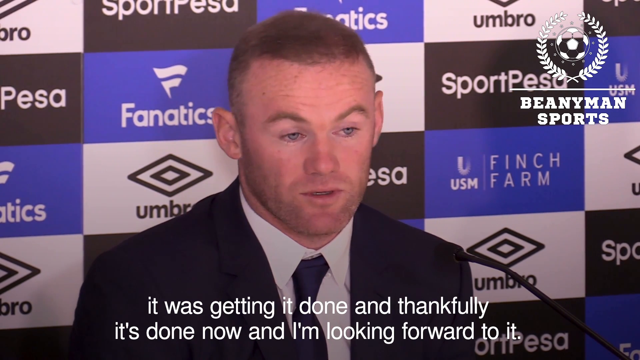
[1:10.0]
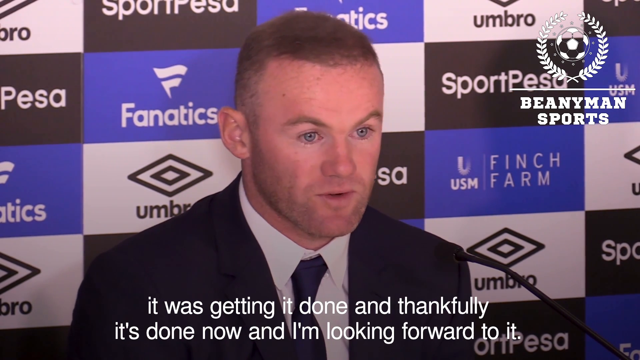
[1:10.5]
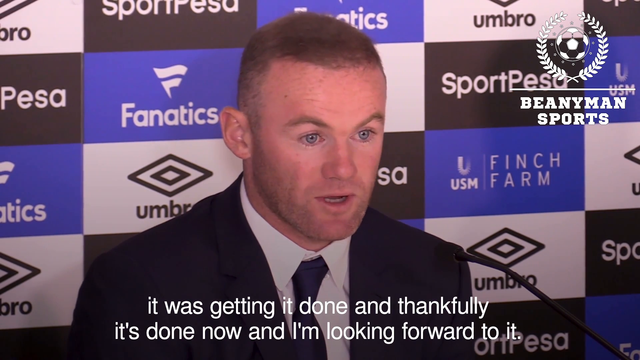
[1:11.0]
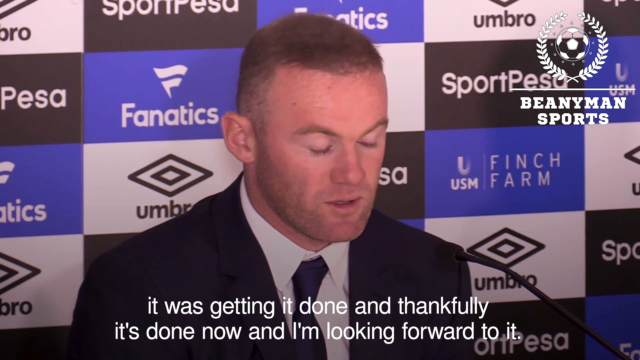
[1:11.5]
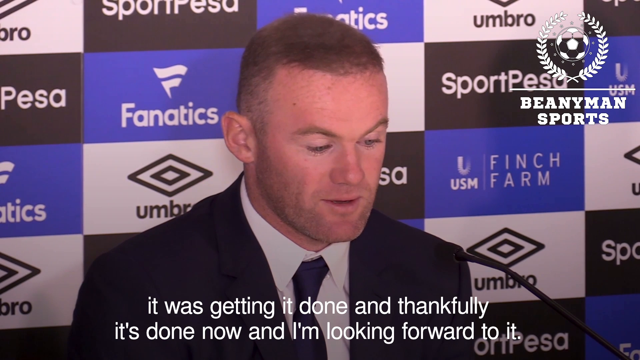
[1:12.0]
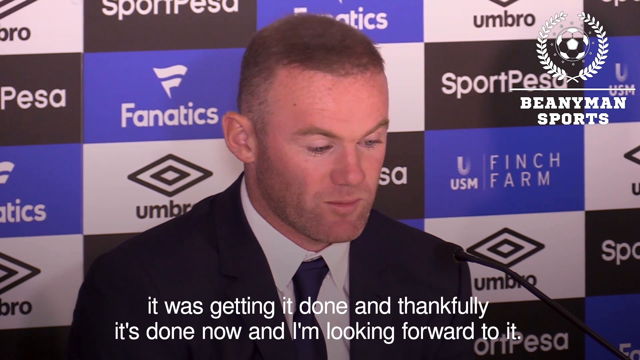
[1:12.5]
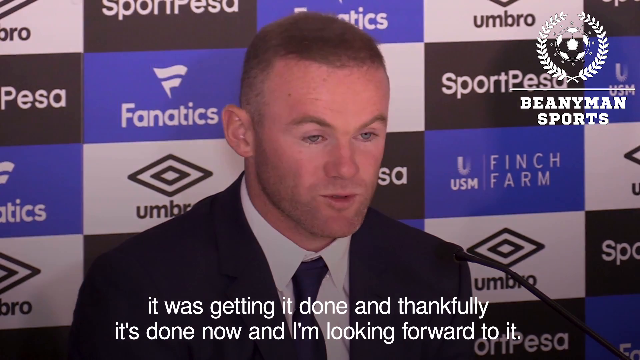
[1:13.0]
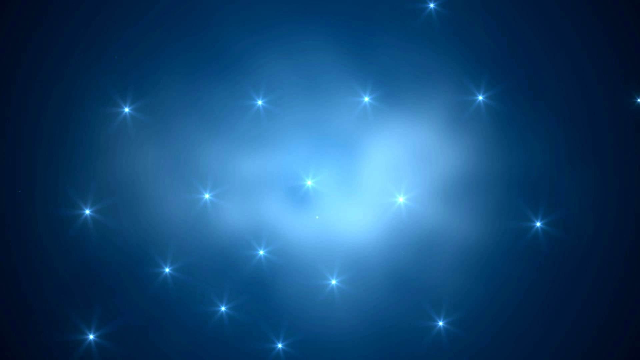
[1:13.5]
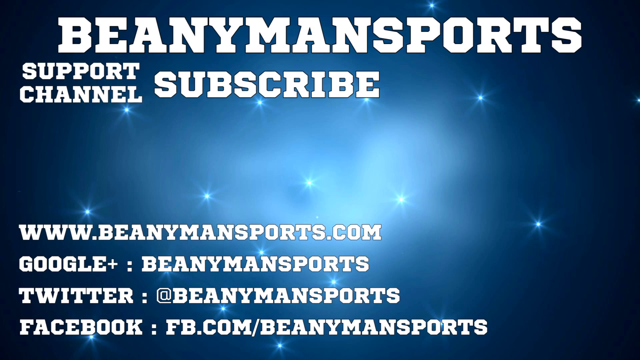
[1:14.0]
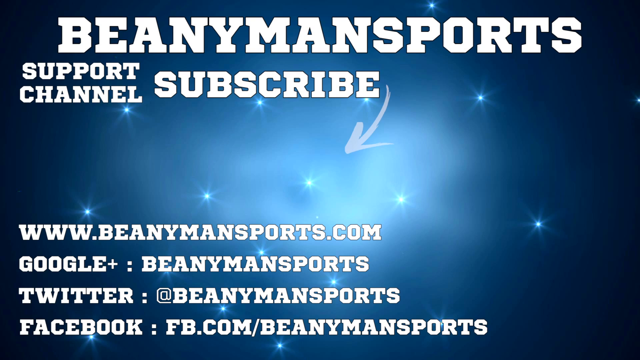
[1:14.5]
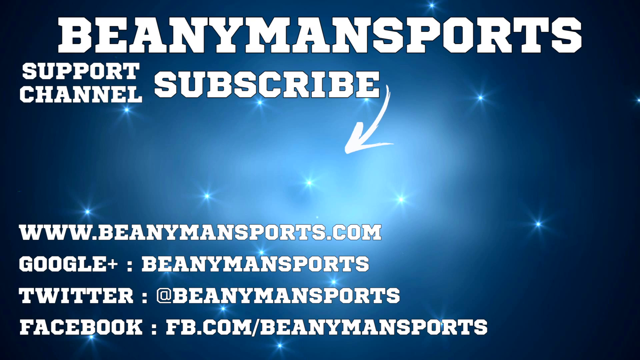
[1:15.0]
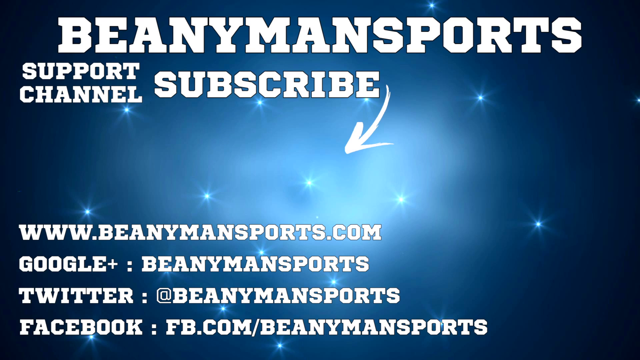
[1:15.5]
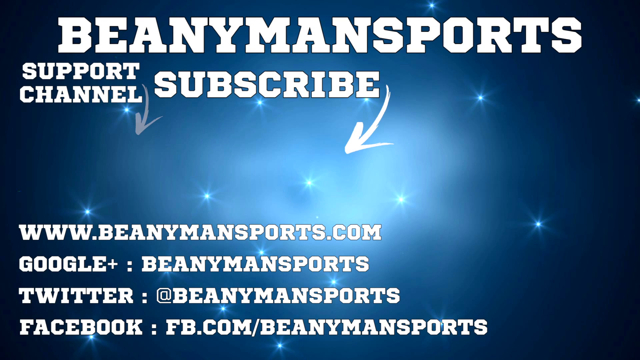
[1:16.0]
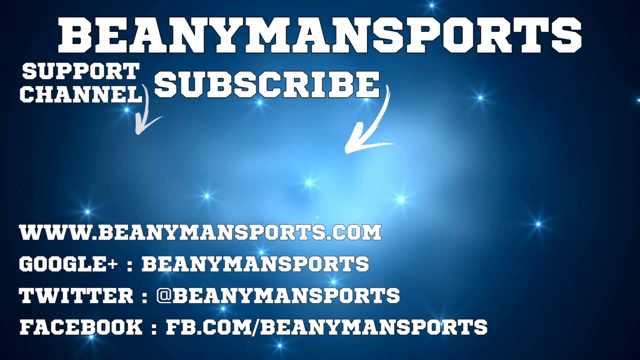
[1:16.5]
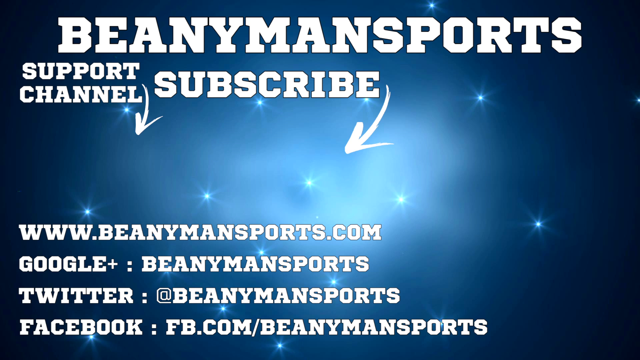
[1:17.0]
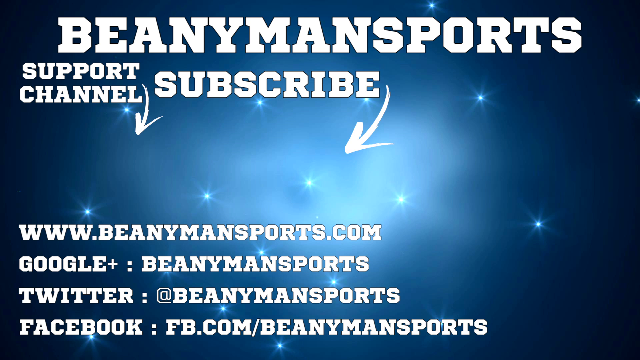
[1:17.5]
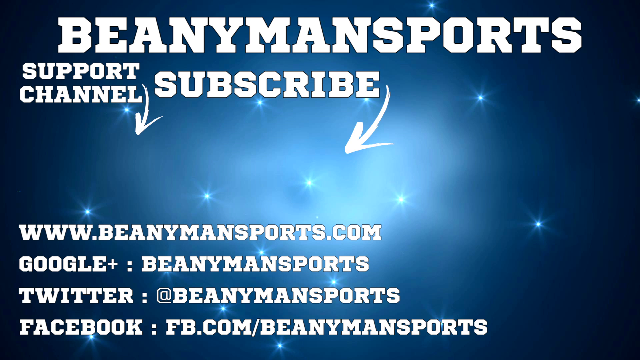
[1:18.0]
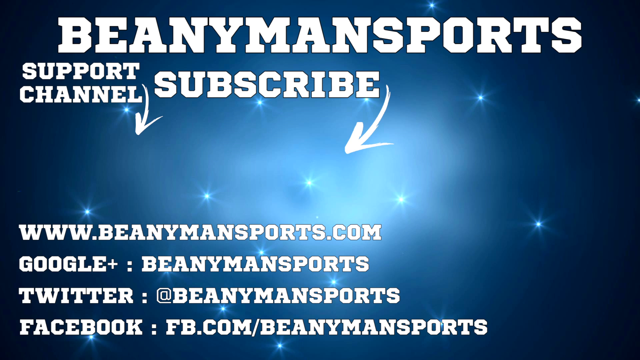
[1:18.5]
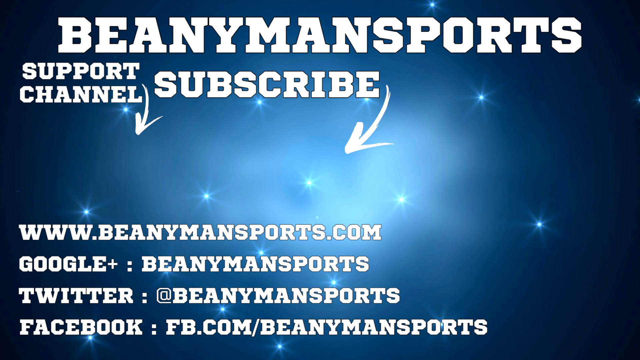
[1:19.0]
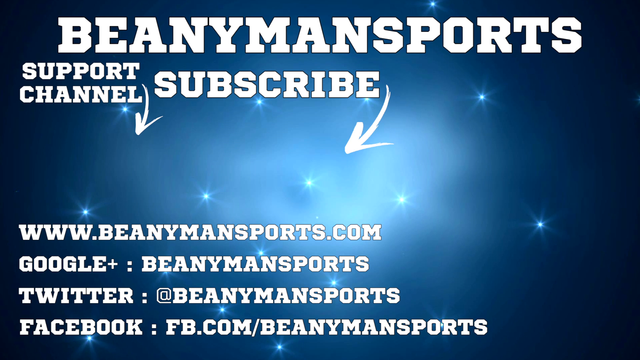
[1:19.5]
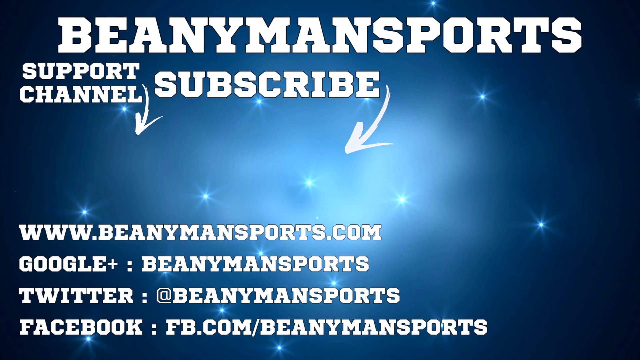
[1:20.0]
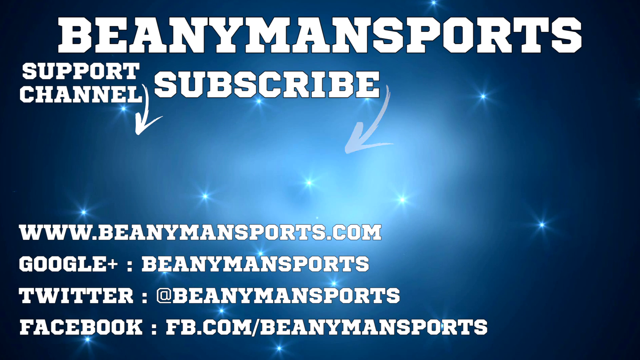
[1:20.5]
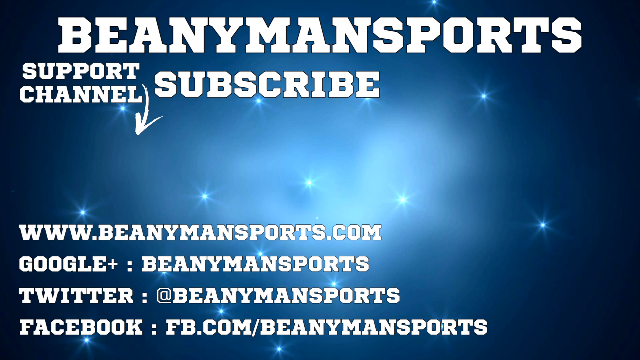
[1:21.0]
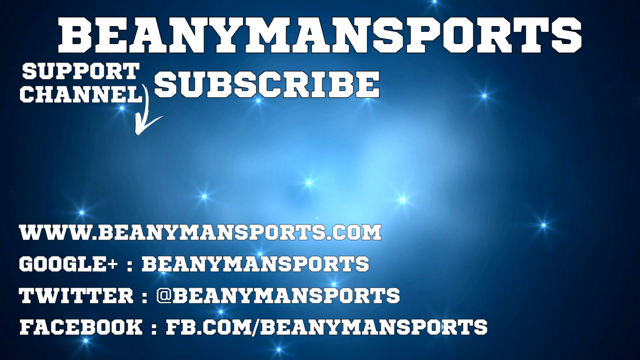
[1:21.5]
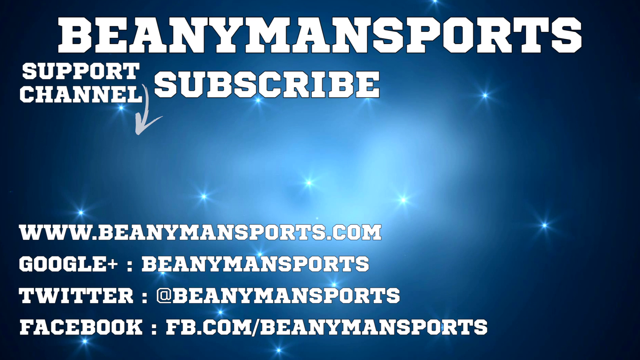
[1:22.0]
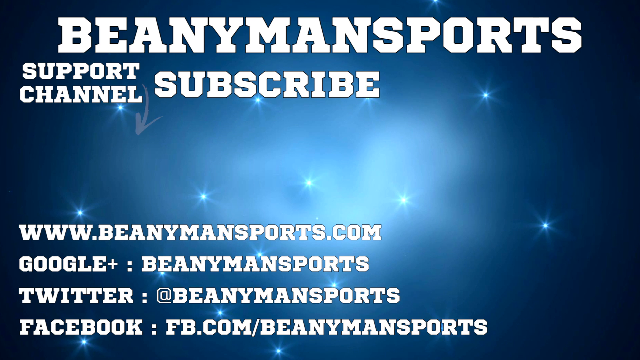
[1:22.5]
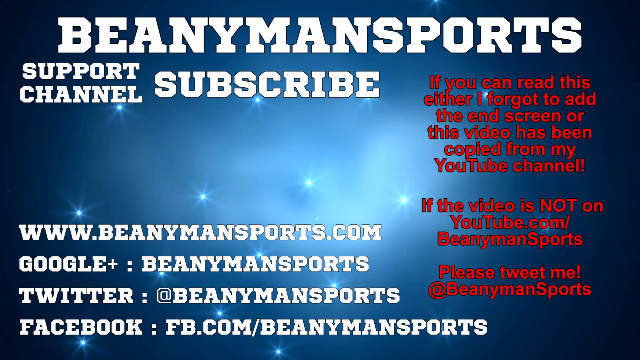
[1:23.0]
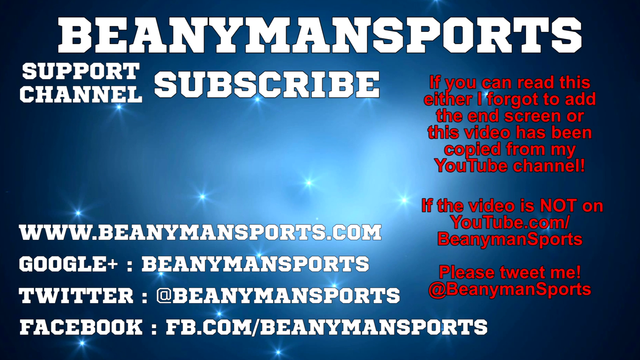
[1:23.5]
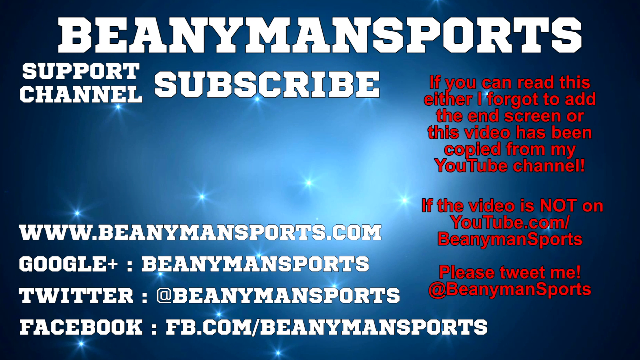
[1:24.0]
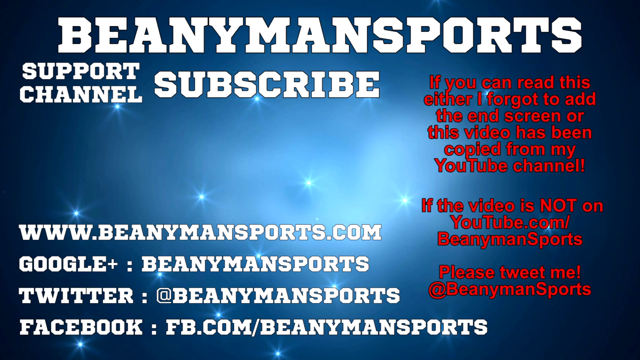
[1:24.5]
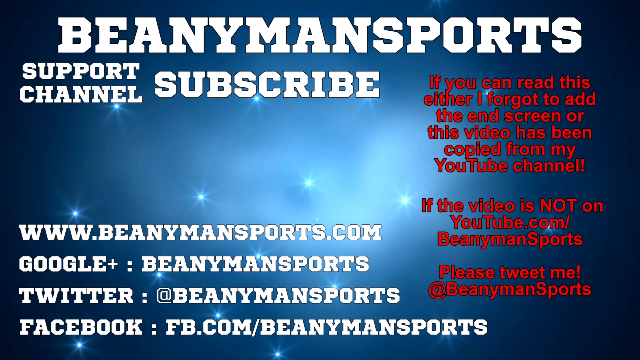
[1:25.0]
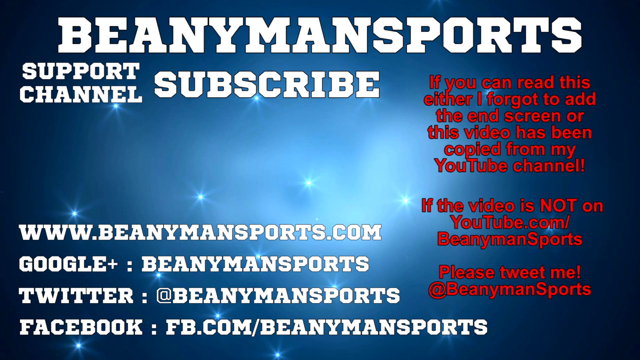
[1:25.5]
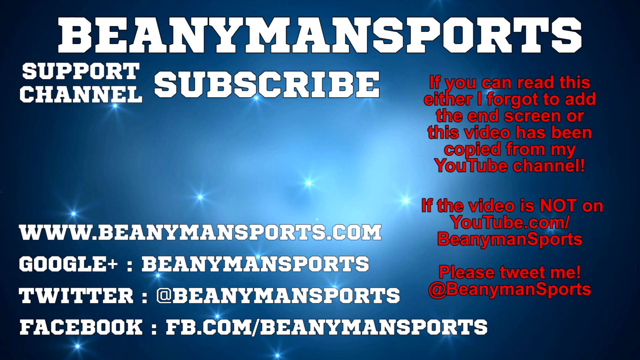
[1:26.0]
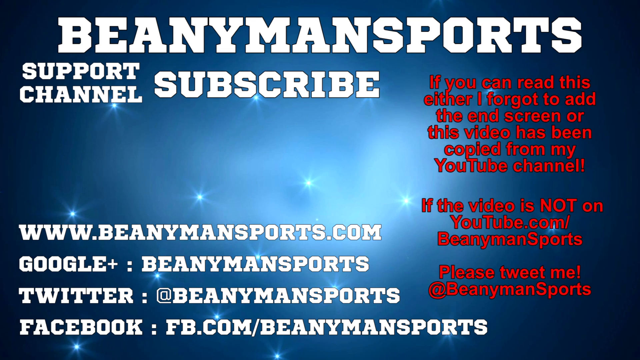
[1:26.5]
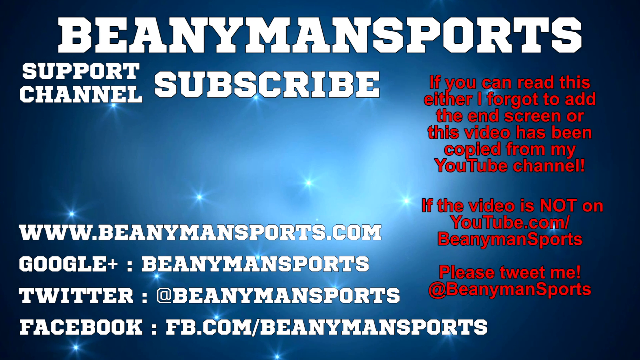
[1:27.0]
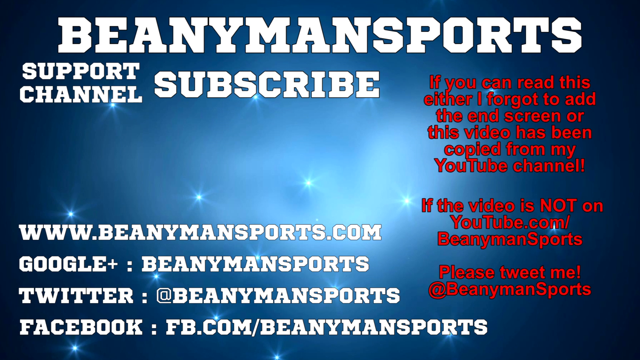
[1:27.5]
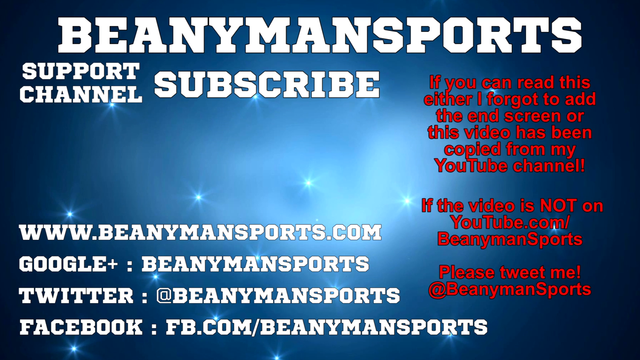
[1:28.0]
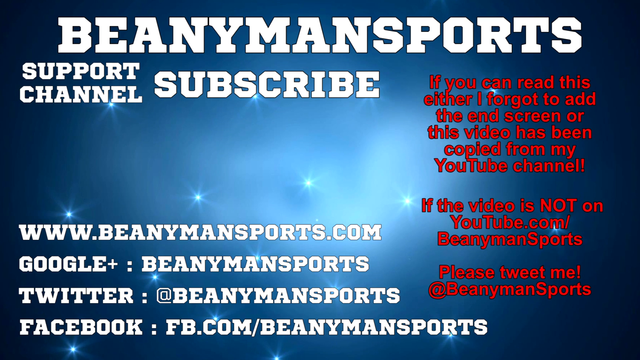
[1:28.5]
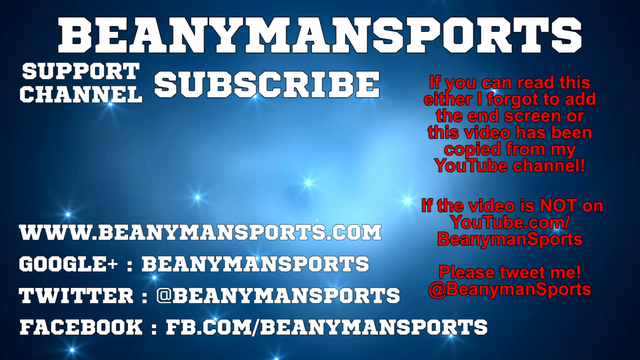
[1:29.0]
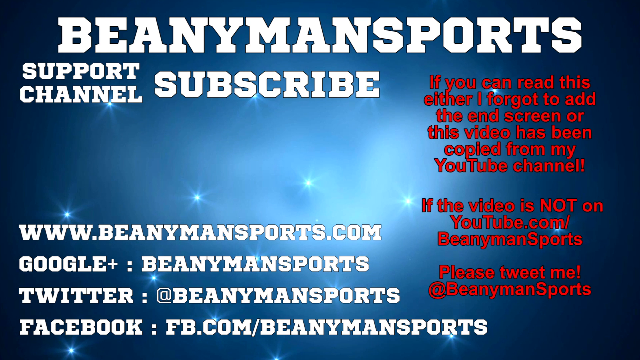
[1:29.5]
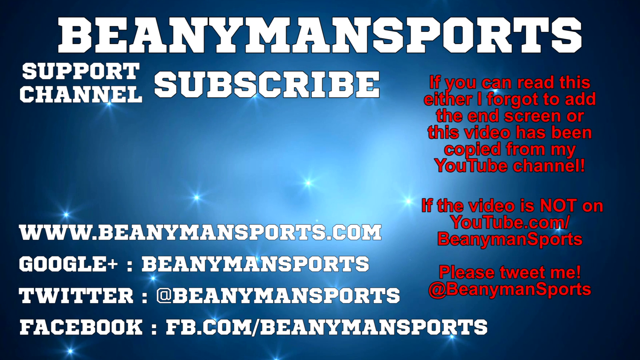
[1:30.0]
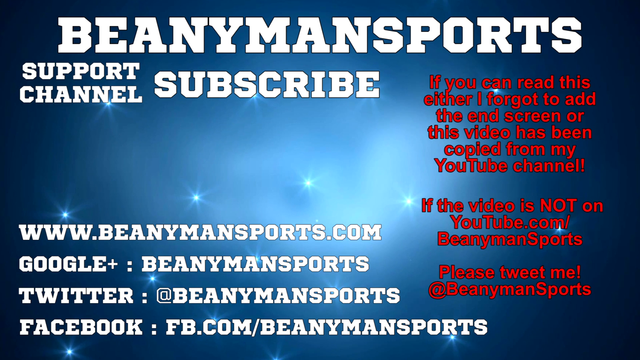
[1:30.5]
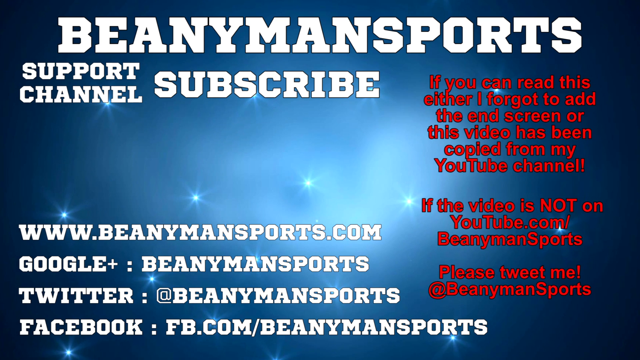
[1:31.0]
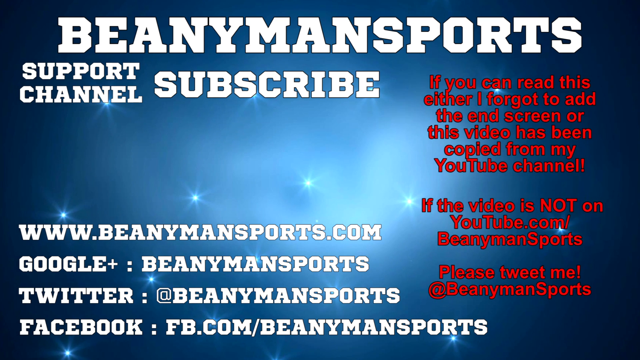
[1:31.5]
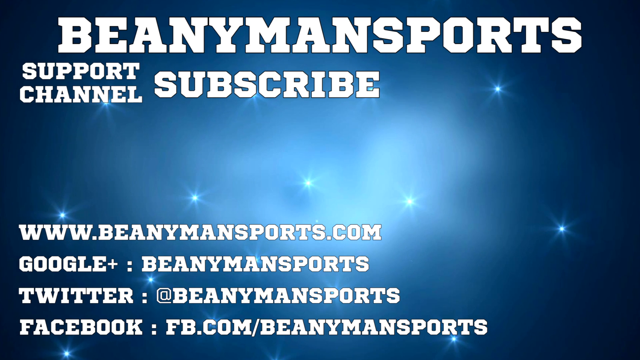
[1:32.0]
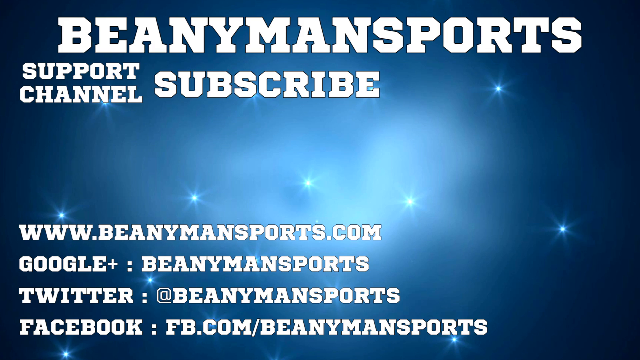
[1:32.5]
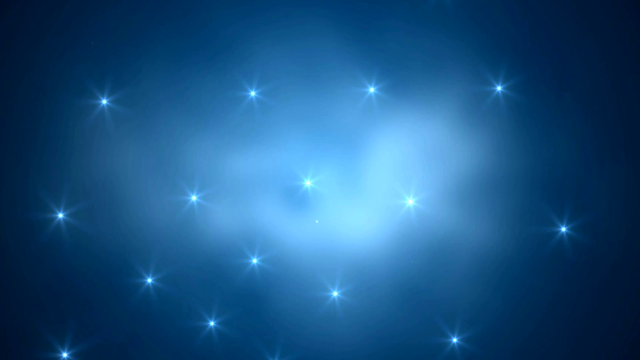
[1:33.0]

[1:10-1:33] Ronnie continues speaking, saying "thankfully it's done now and I'm looking forward to it," perhaps answering a reporter's question about his return. His face is still serious, with no smile. After the interview ends, a black screen with blue in the middle appears, with little stars and the text "Binnie Man Sports." The screen asks people to support and subscribe to the channel in several ways: www.beanymansports.com, Google+ BeanyManSports, Twitter at BeanyManSports, or Facebook/BeanyManSports. Words in red say that anyone who sees this video somewhere other than his YouTube channel should message him on Twitter.